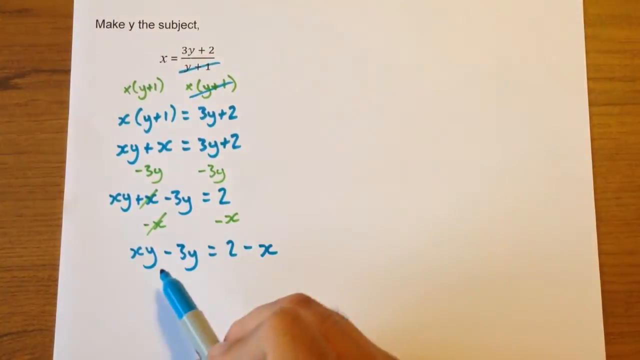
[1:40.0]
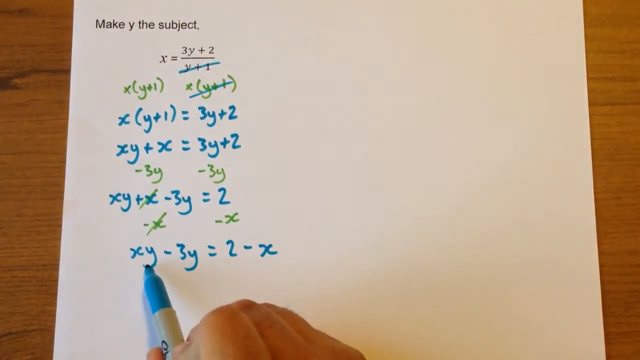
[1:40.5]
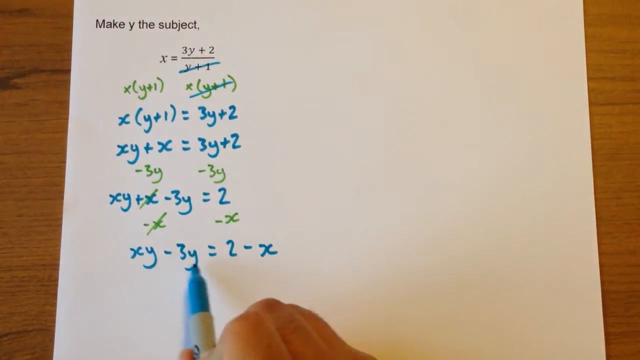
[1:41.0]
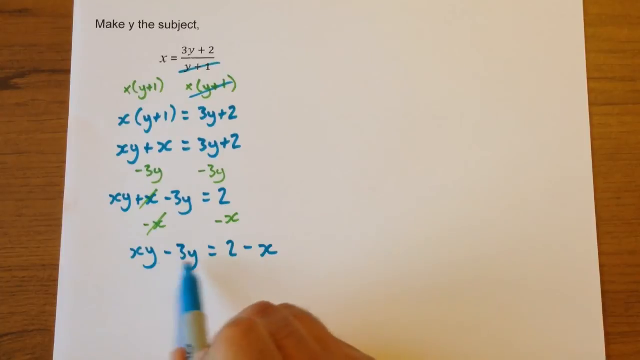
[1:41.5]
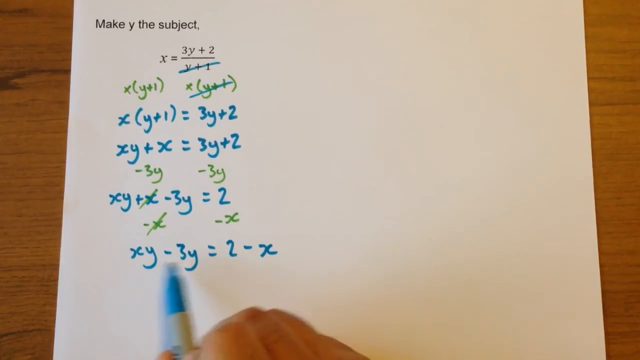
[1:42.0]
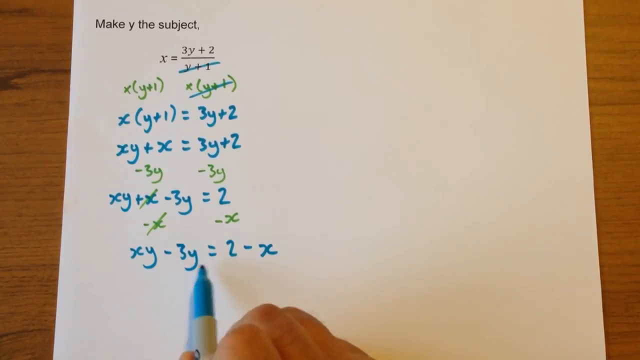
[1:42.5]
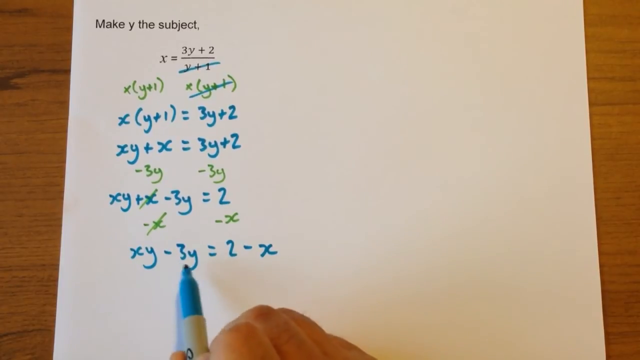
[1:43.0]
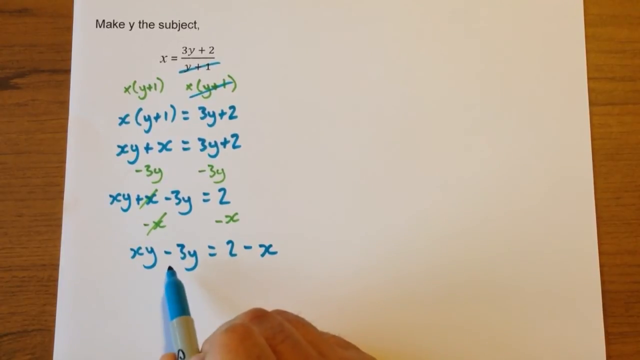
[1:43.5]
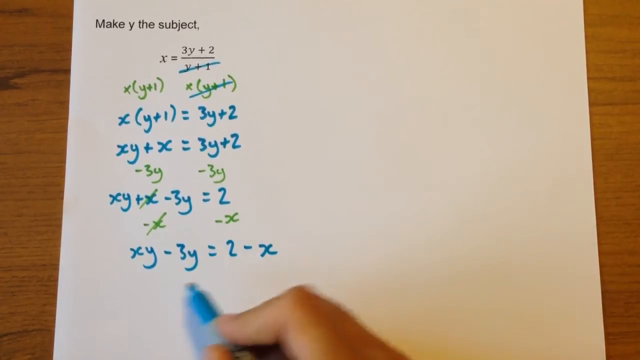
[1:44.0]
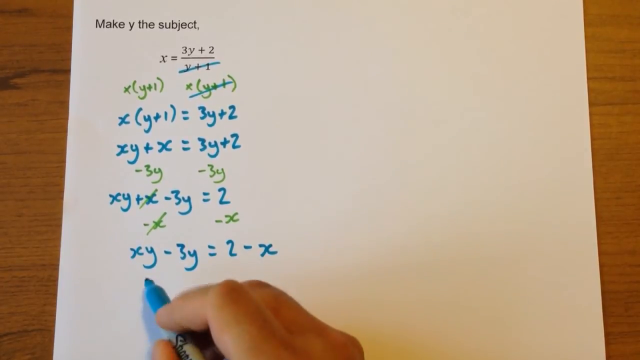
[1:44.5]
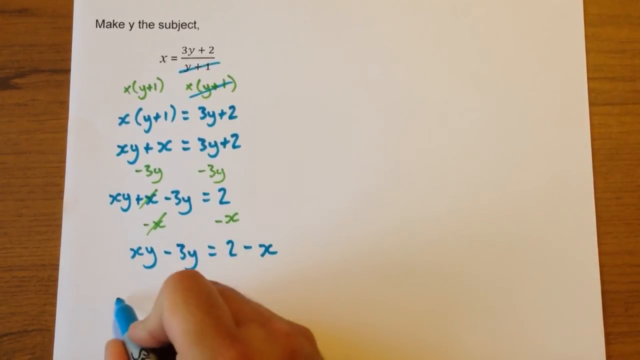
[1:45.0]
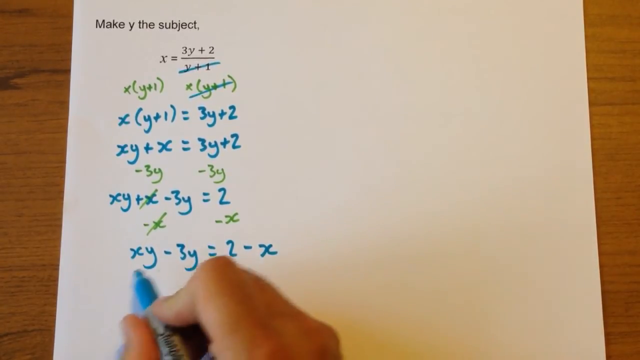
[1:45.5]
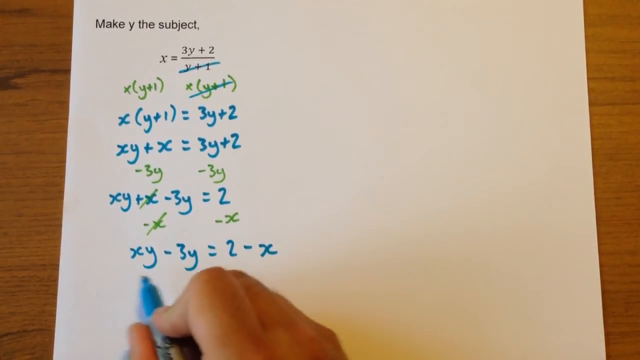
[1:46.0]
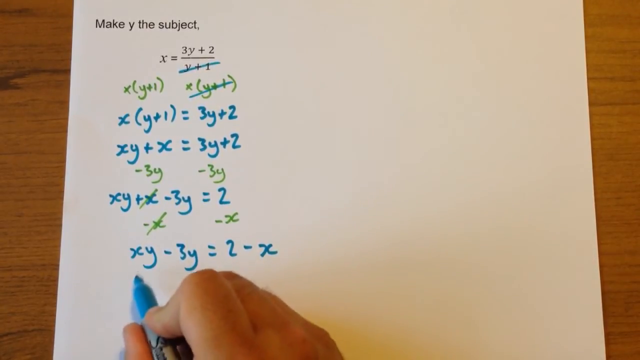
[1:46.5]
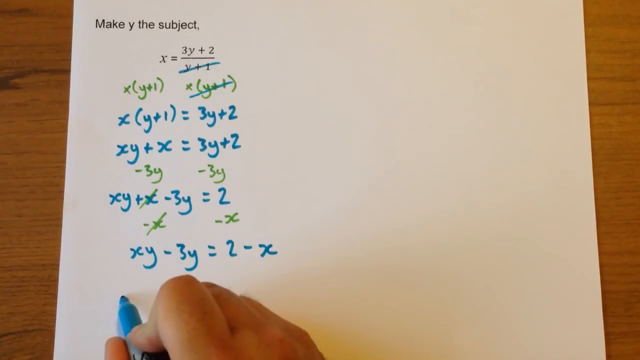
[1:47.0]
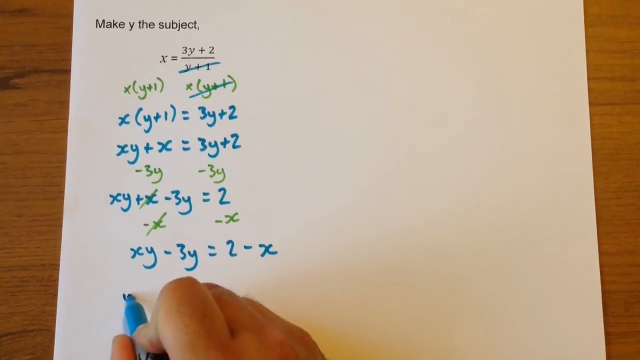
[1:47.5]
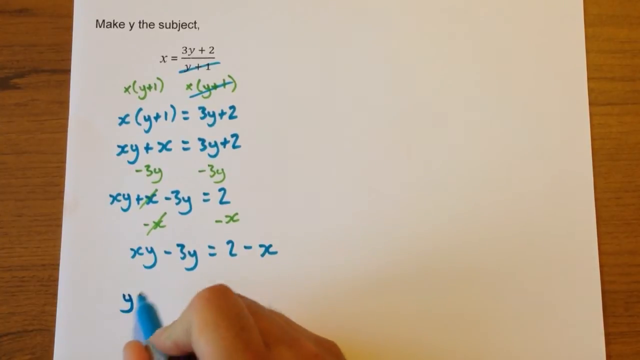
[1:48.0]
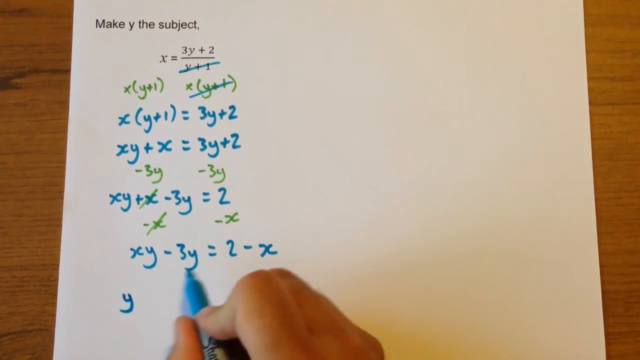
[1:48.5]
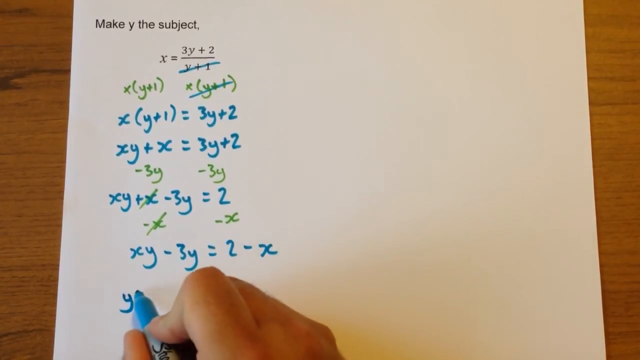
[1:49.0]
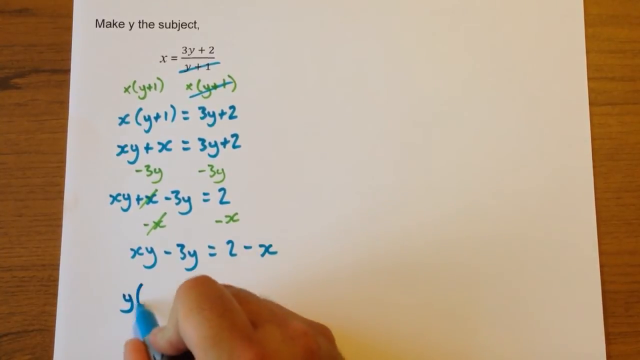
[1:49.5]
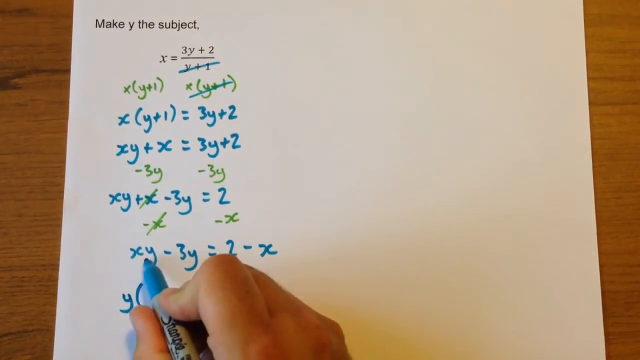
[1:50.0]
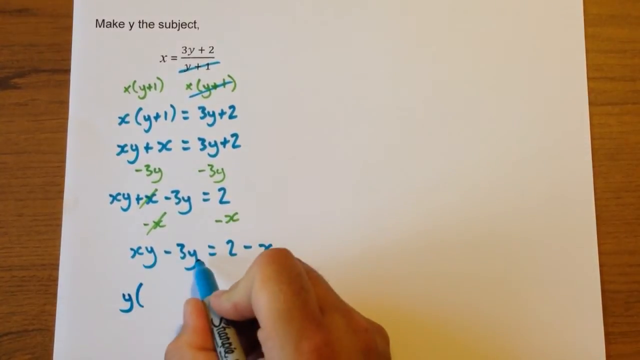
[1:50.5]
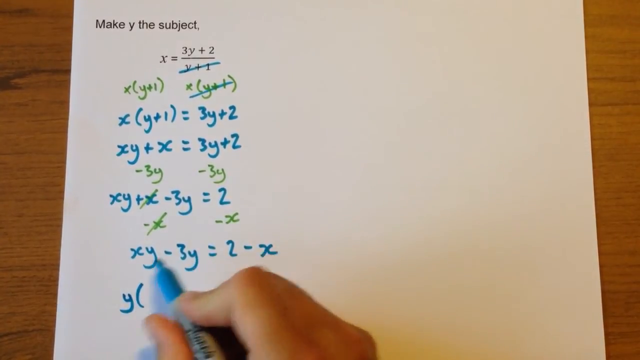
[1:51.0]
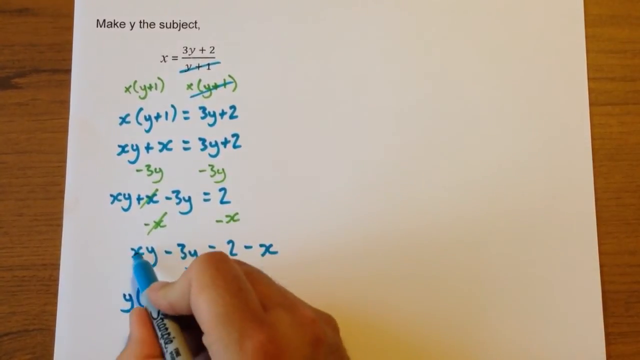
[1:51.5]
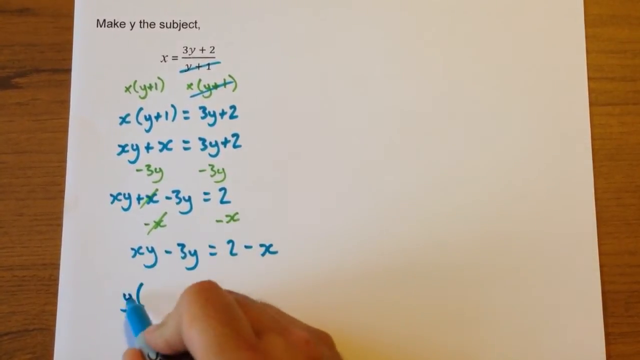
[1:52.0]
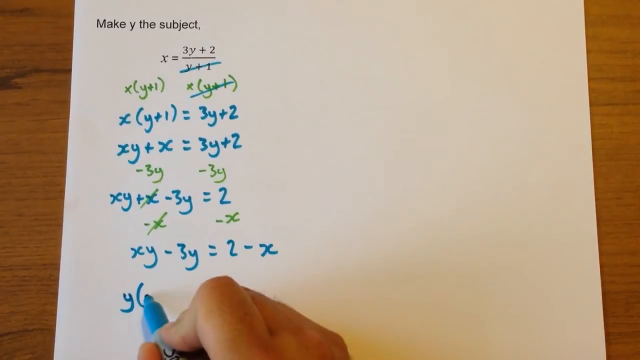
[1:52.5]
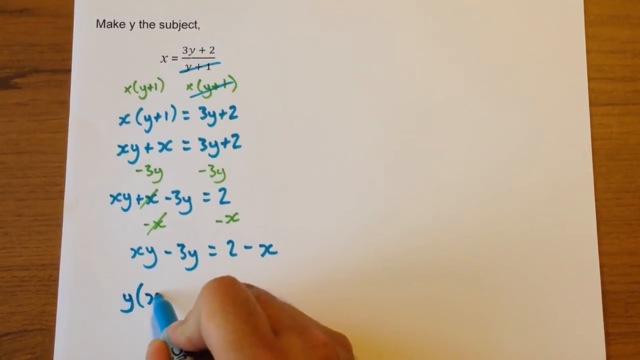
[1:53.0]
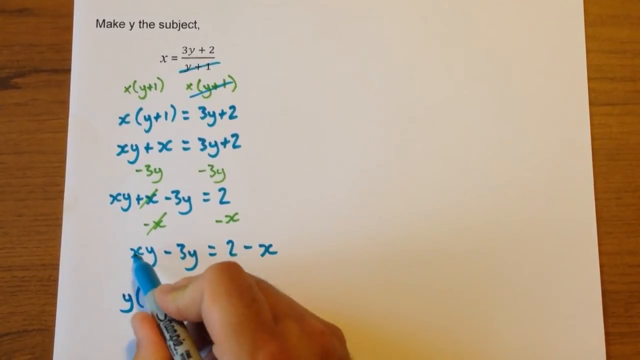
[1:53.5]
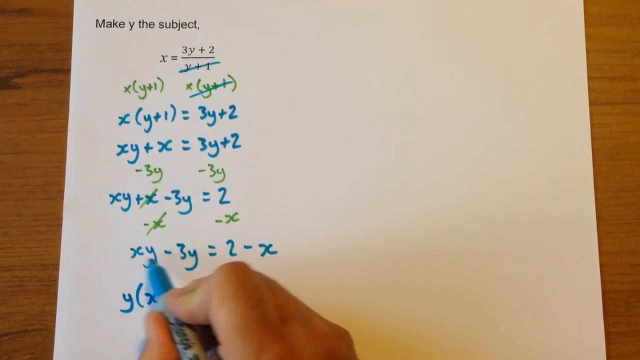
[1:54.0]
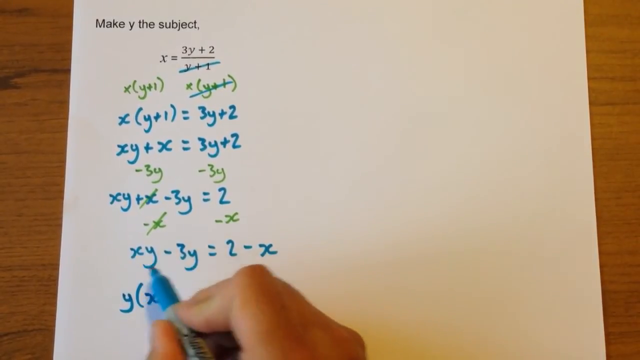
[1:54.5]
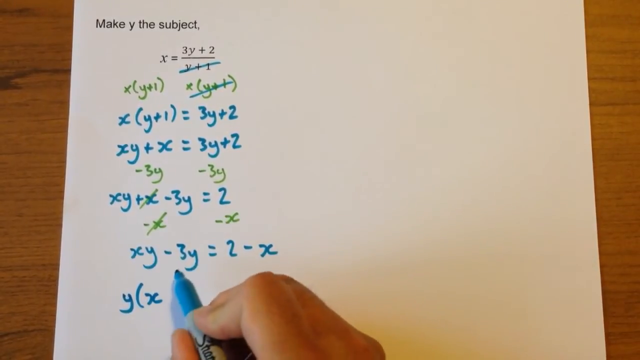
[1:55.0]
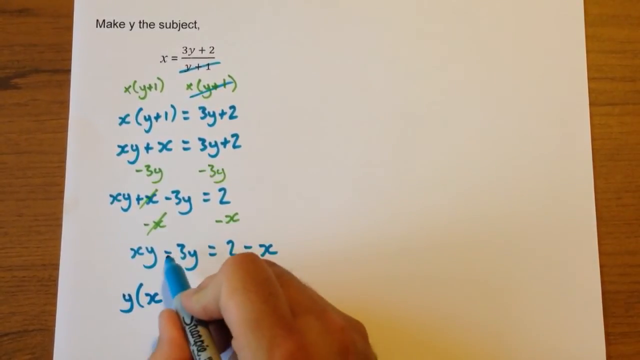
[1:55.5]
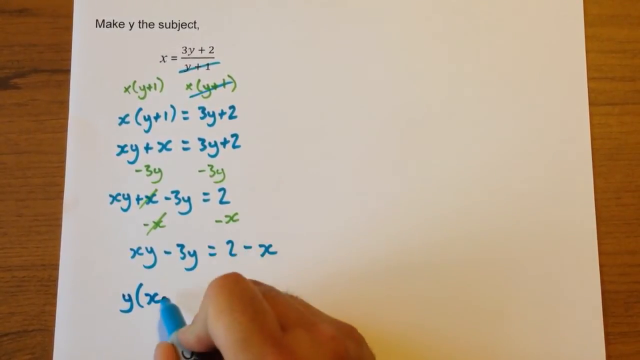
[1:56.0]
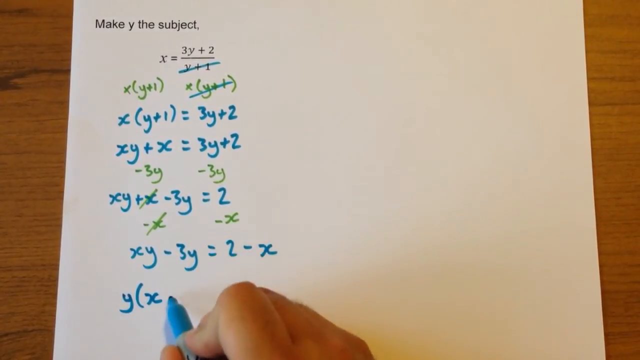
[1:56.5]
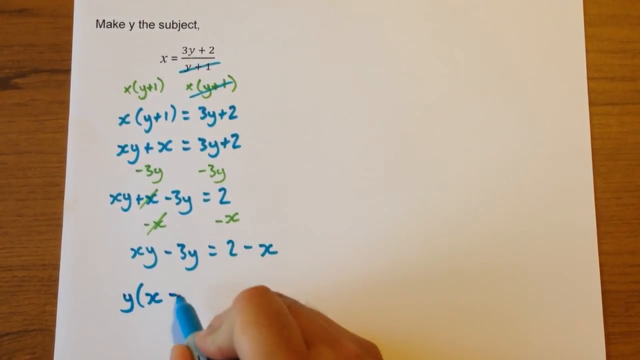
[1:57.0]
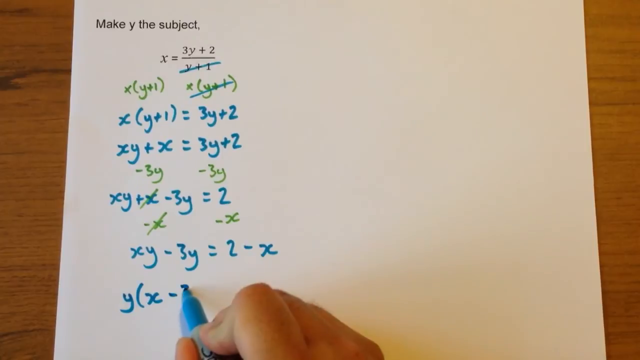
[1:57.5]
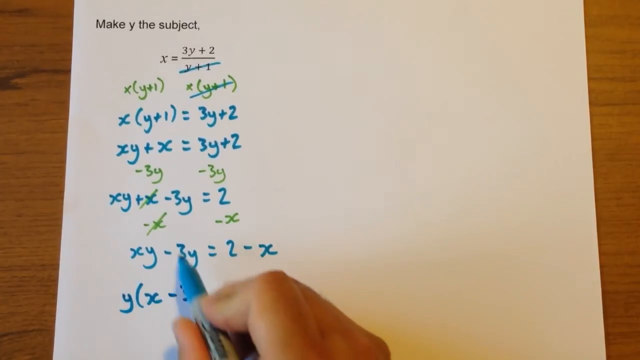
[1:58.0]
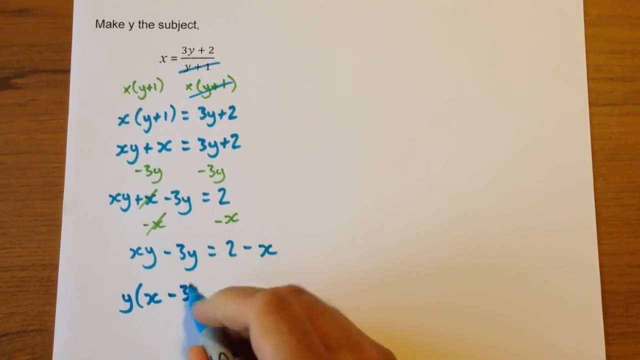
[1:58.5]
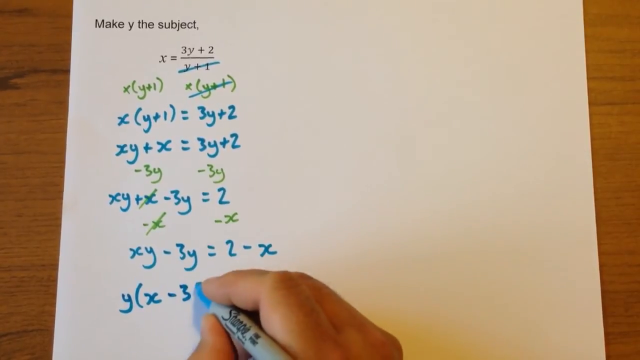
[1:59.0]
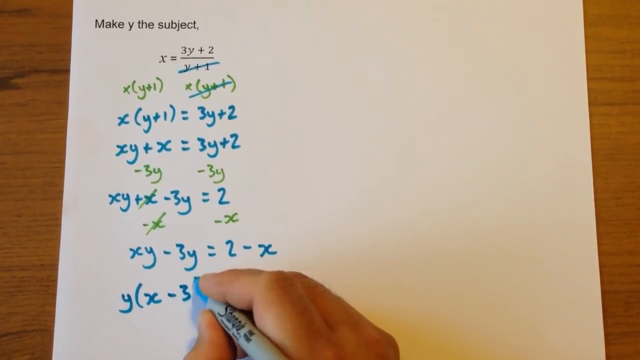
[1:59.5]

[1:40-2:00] The equation is being solved on a white piece of paper on a brown table. A Caucasian right hand is visible. In the upper left corner of the paper is "make y the subject," with the equation x = (3y + 2)/(y + 1) underneath. The person uses a combination of a blue and a green Sharpie. Toward the middle is xy + x = 3y + 2, then in green Sharpie 3y, and the same 3y again. Underneath that, in blue, is xy + x − 3y = 2, then in green −x and −x, and below that, xy − 3y = 2 − x.